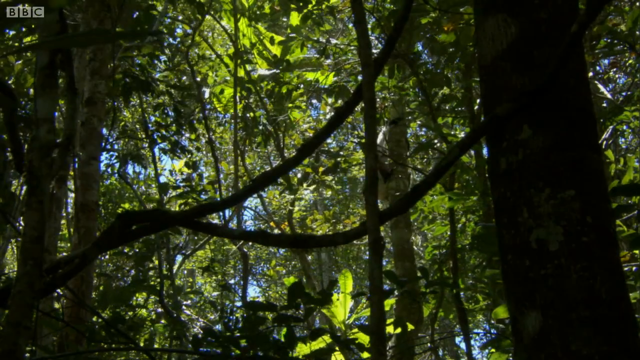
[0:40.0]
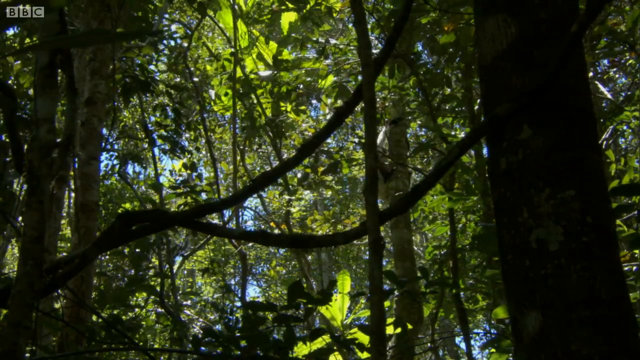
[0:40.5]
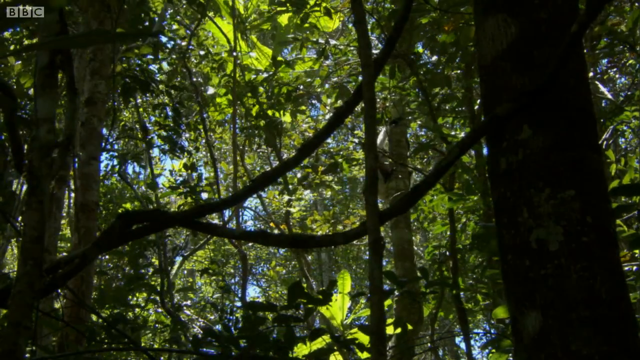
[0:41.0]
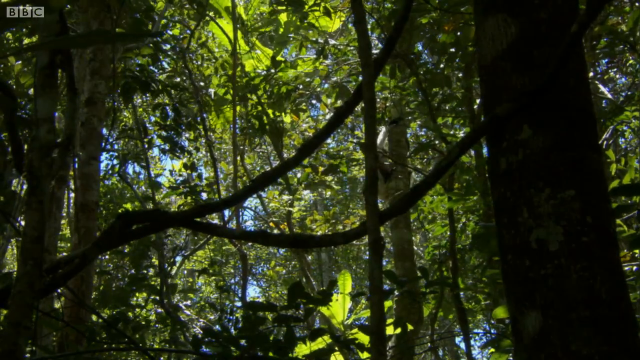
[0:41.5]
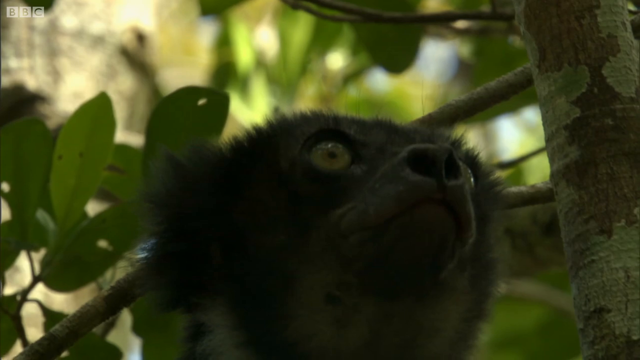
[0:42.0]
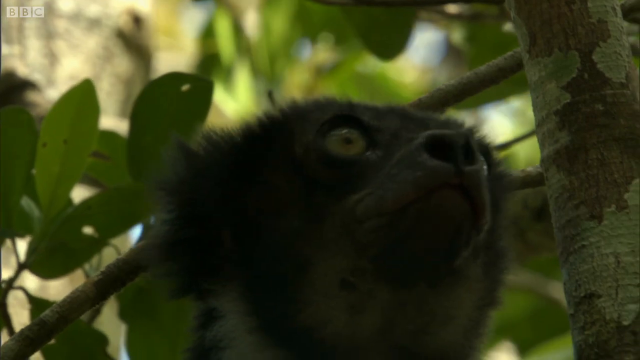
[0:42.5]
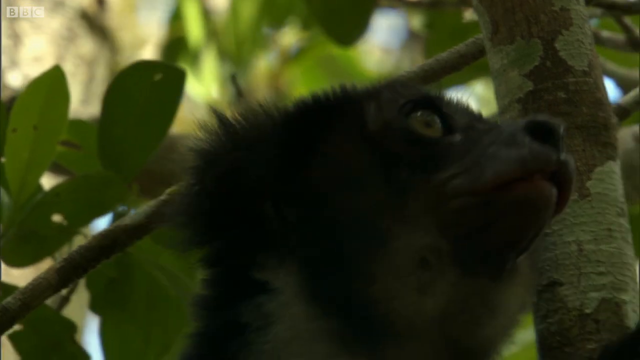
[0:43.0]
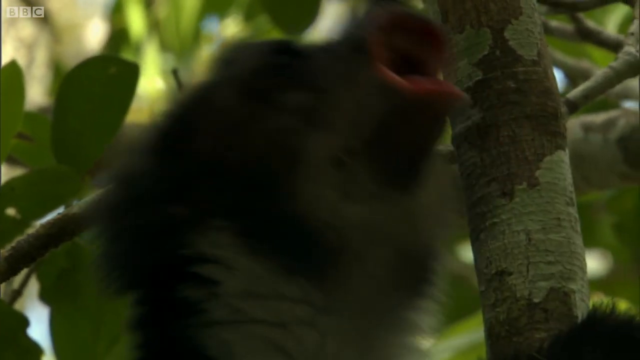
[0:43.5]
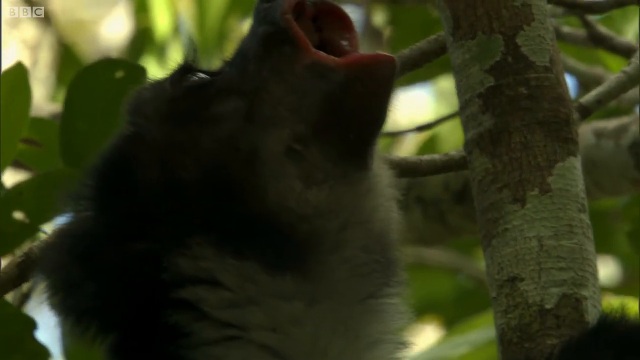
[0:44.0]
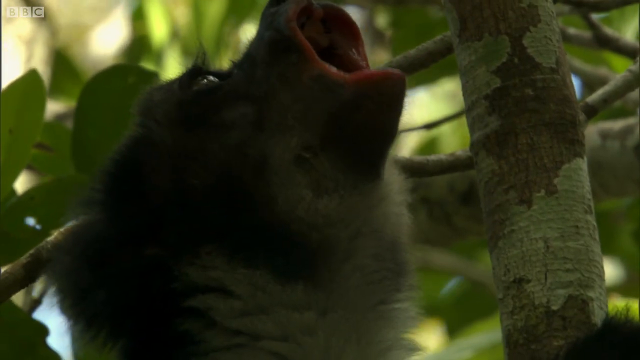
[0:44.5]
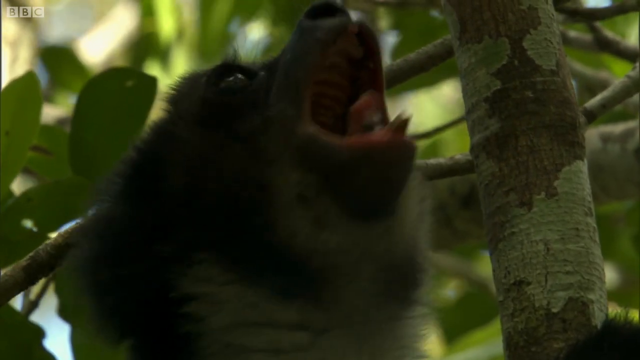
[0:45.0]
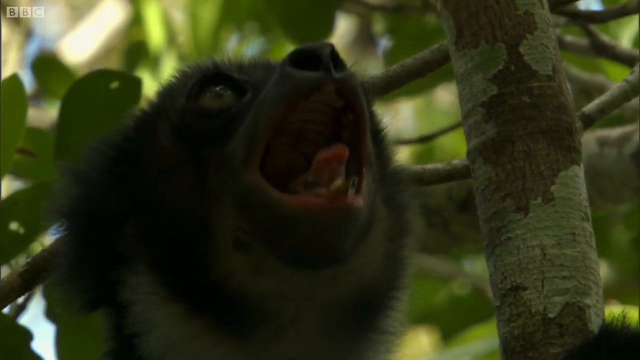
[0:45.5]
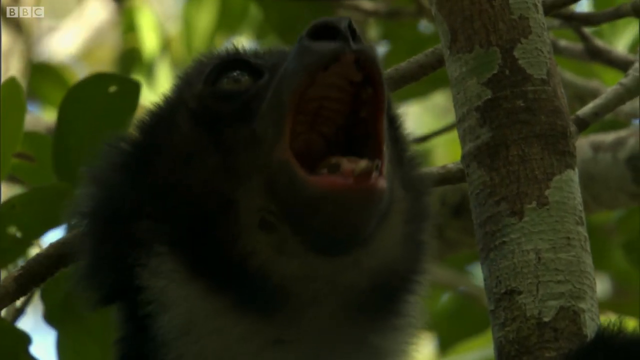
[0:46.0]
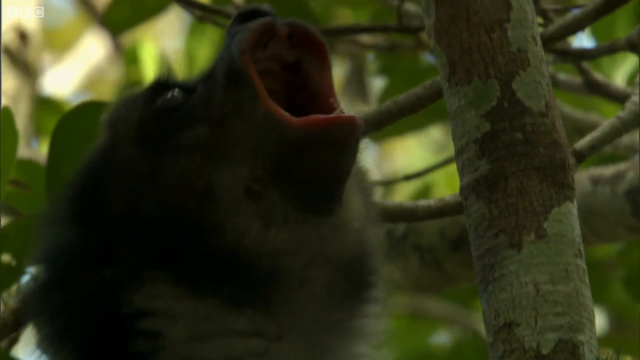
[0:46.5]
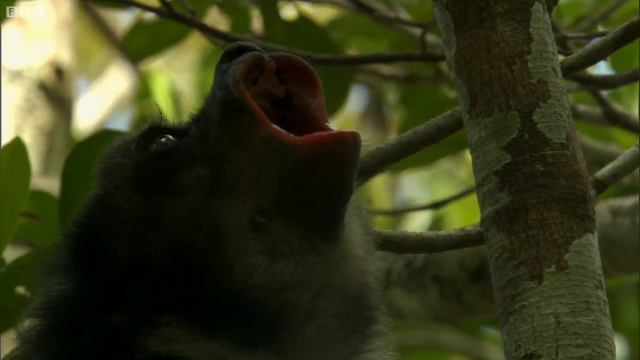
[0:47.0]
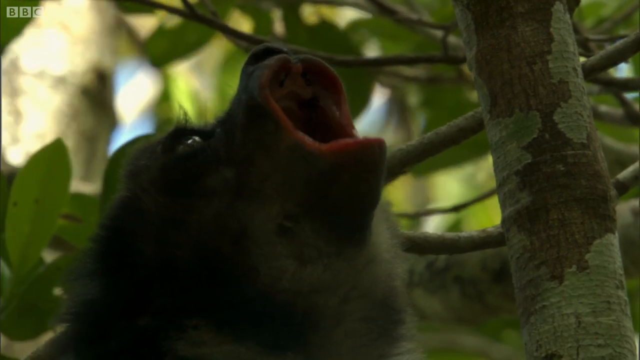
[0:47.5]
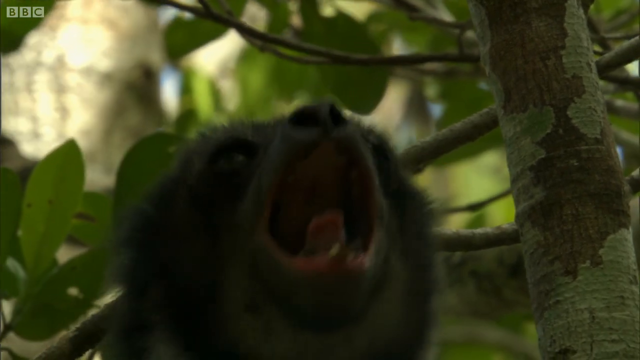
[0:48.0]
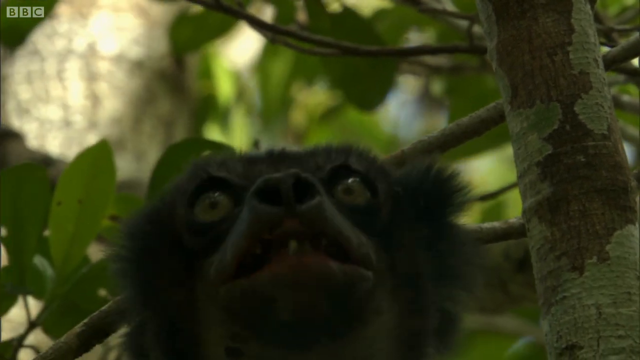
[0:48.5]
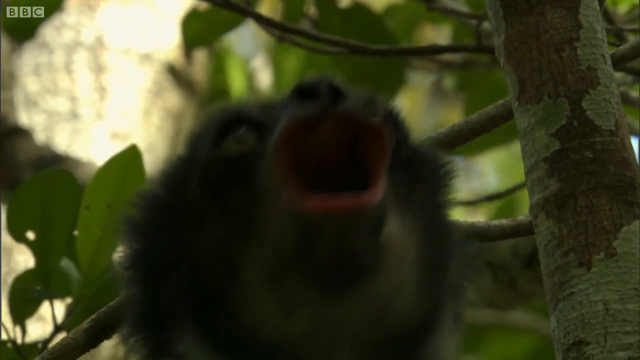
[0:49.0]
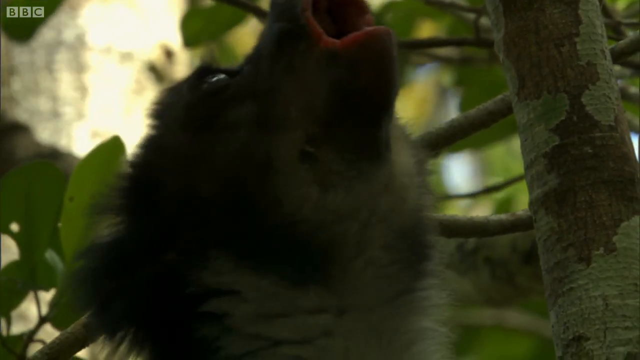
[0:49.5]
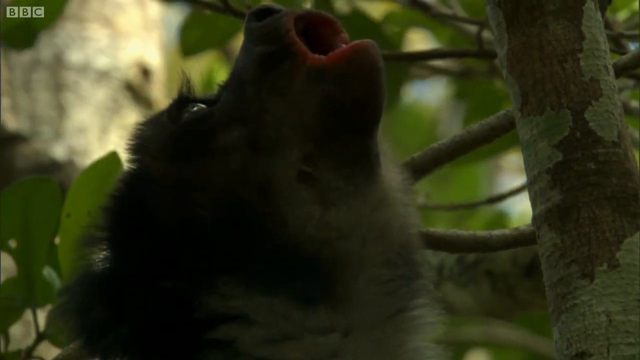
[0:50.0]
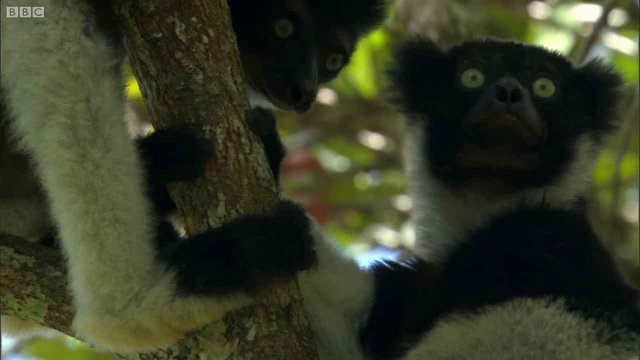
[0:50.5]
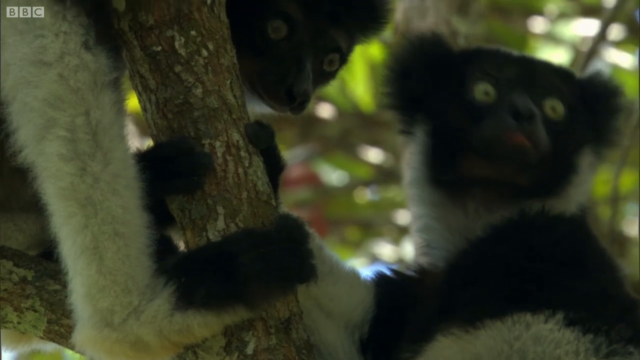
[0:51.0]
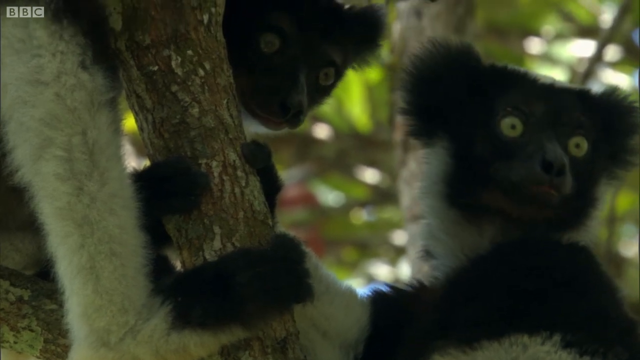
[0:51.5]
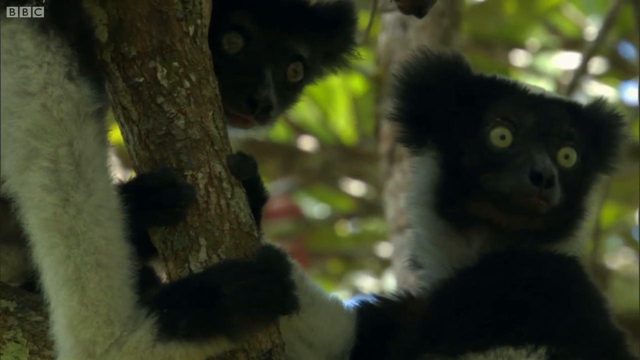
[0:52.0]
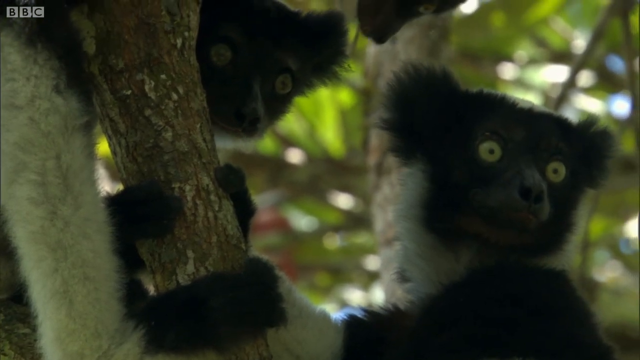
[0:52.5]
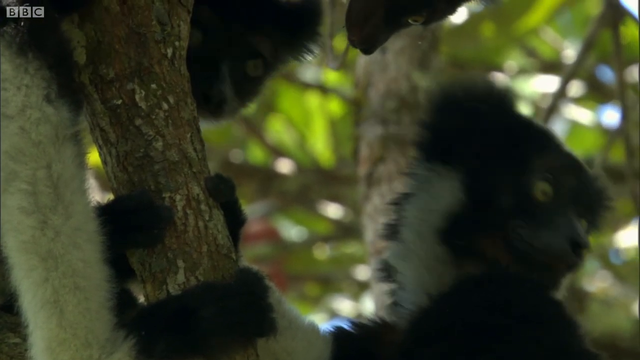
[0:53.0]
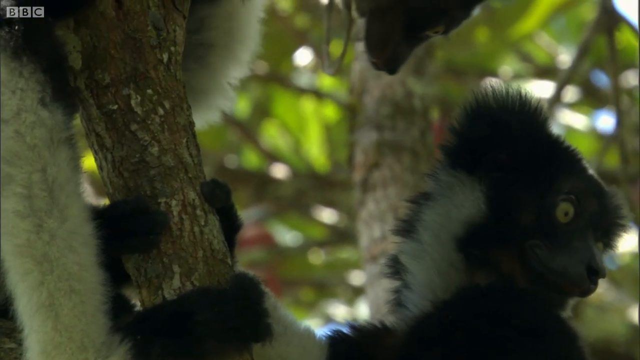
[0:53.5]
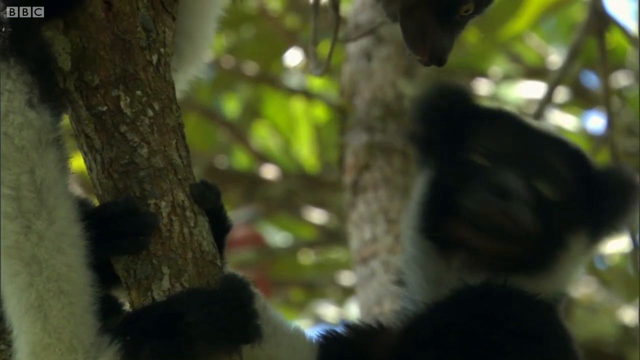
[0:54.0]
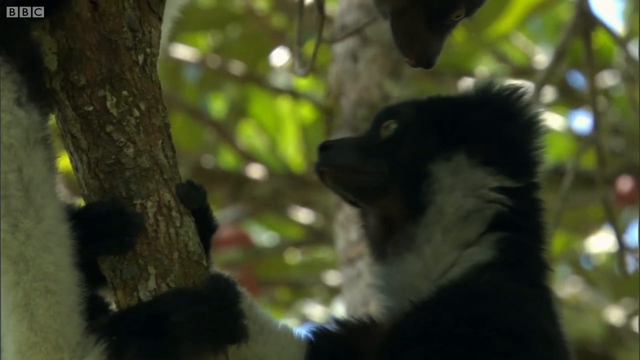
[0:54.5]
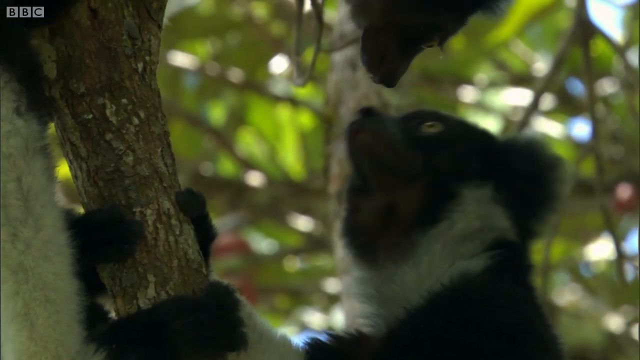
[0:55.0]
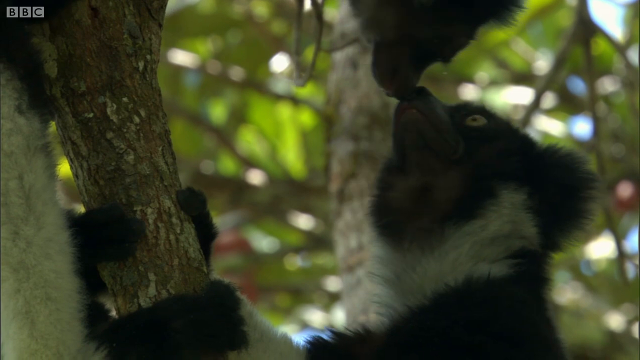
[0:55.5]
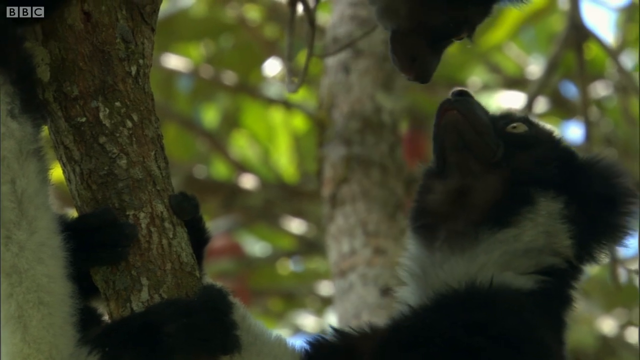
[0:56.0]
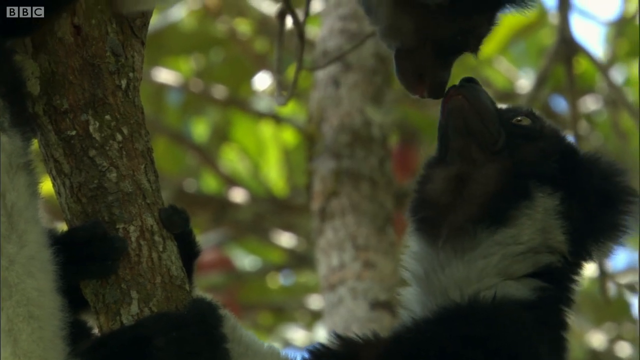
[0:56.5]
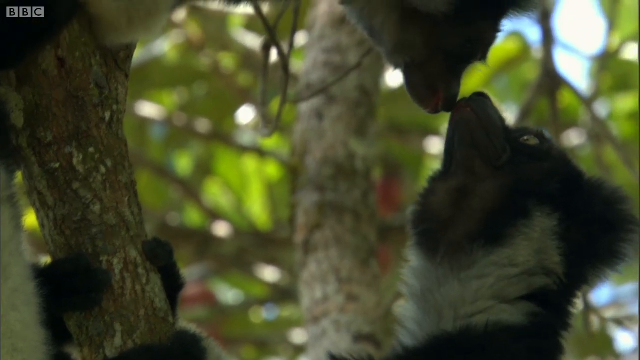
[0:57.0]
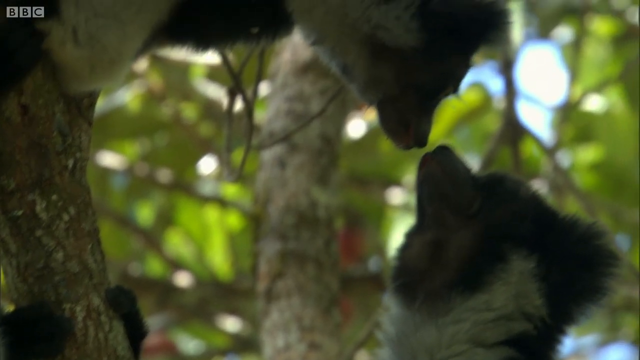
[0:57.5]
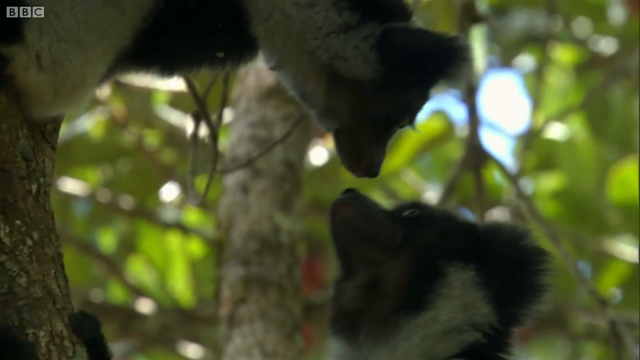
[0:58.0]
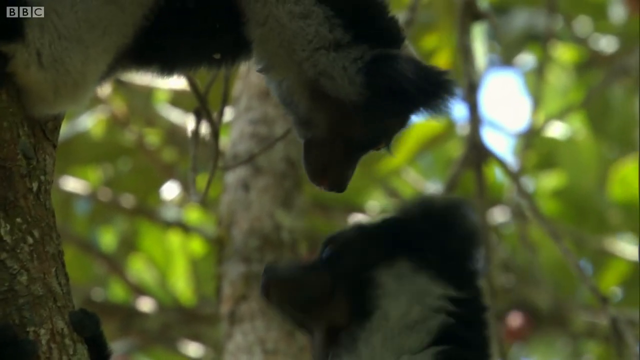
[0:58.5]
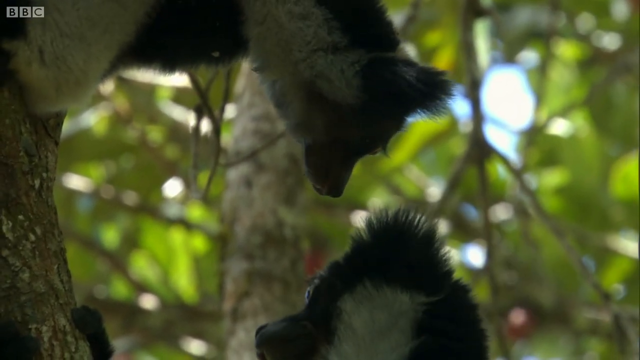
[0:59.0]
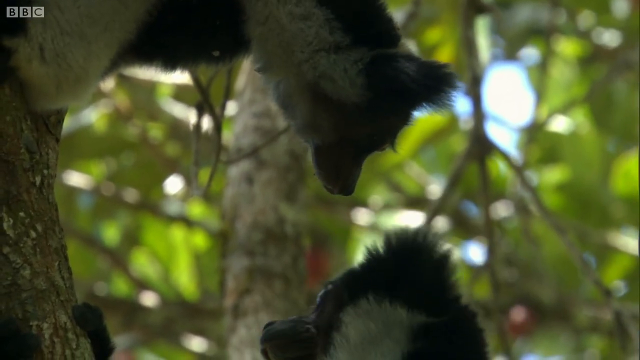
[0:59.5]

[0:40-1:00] In a dense forest with tightly packed trees, a far-out view gives way to a close-up of a single lemur with its mouth open, seemingly making some sort of call to other lemurs. The camera then shows two other lemurs that seem to have heard the call; they are wide-eyed, looking in the direction of the other lemur and at each other, almost seeming to communicate as they seem to interpret the call. The camera stays close on them as they wrap their limbs, hands and feet around different branches. They have black, white and grayish fur and very greenish eyes, almost the same color as the surrounding leaves. They look surprised.